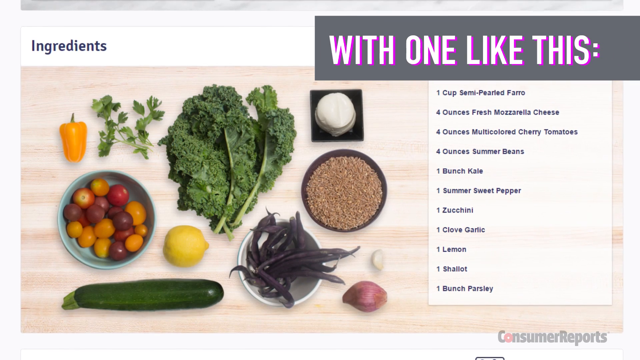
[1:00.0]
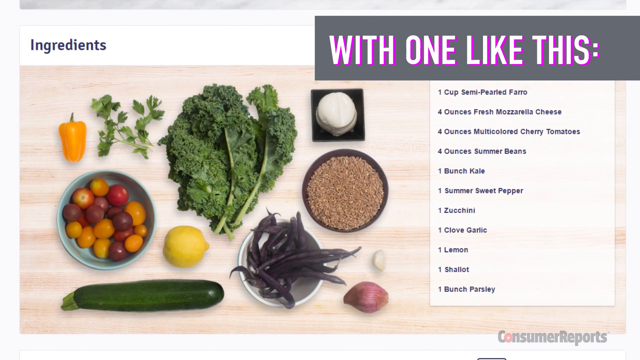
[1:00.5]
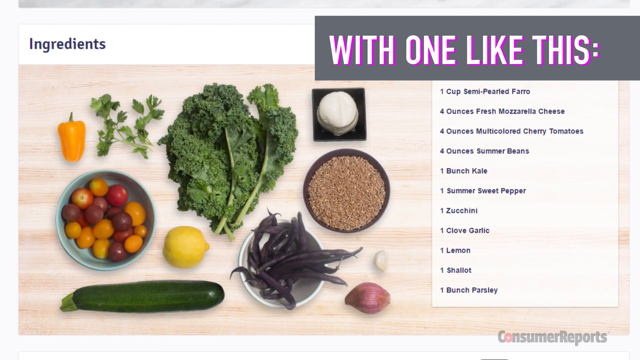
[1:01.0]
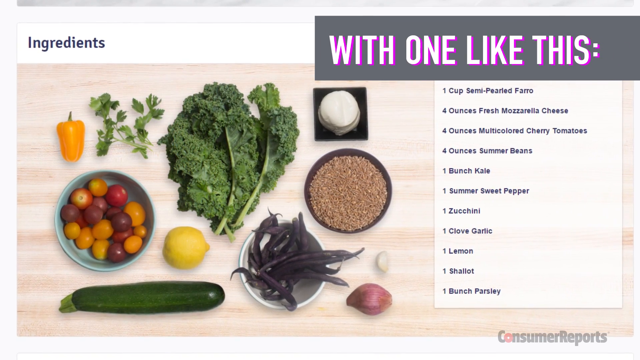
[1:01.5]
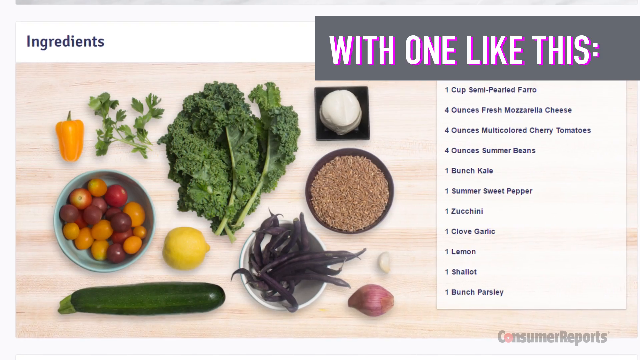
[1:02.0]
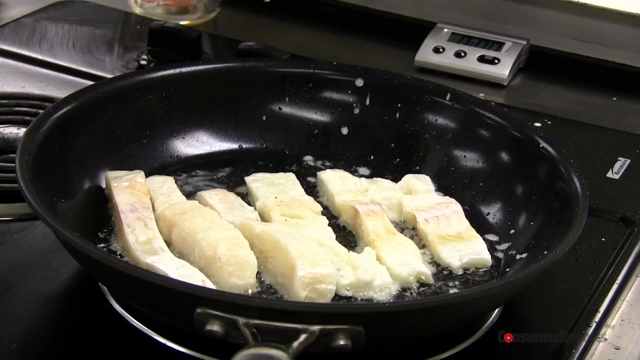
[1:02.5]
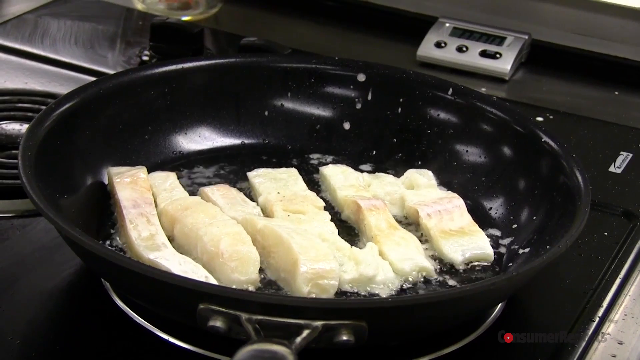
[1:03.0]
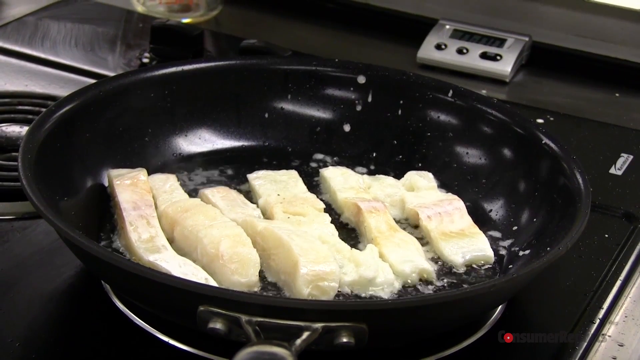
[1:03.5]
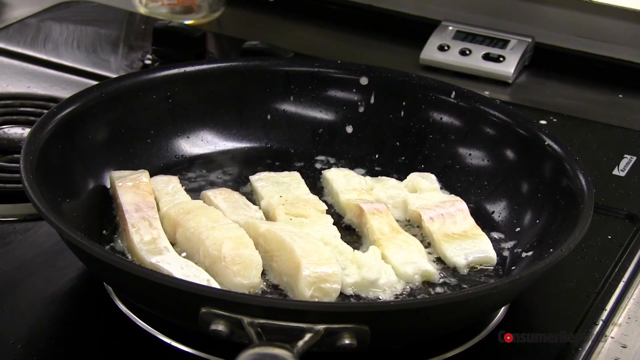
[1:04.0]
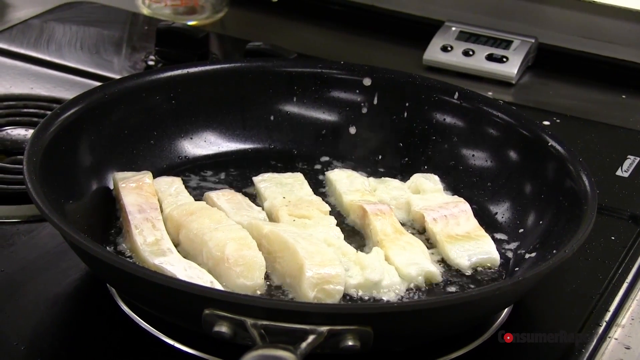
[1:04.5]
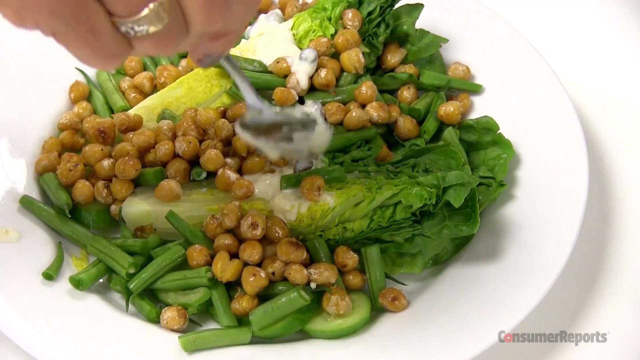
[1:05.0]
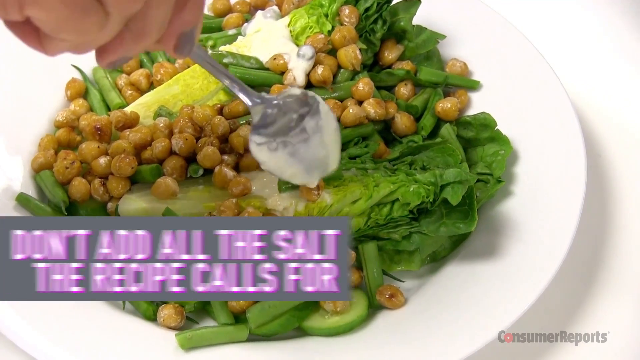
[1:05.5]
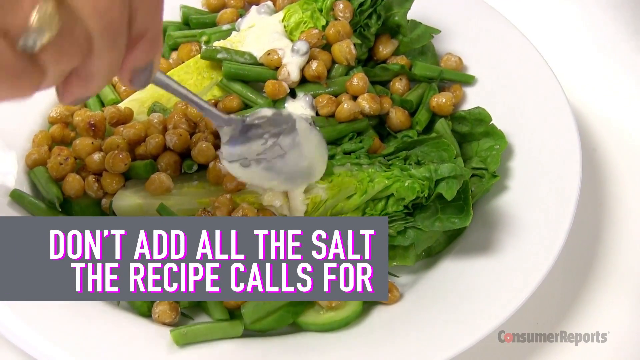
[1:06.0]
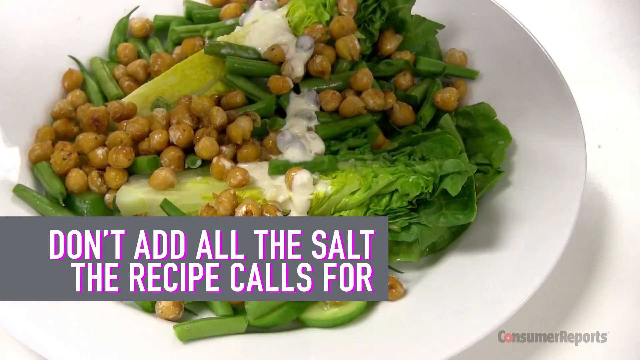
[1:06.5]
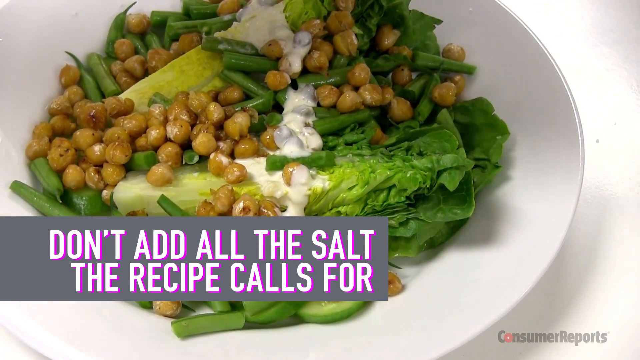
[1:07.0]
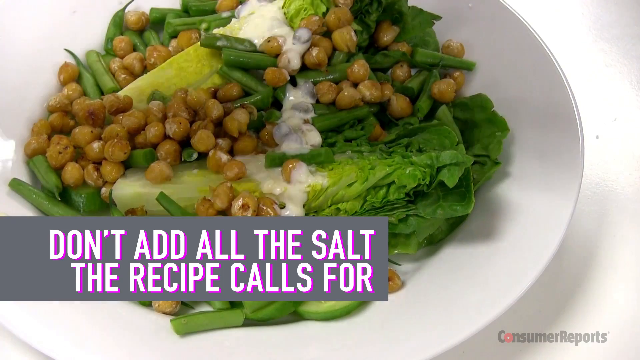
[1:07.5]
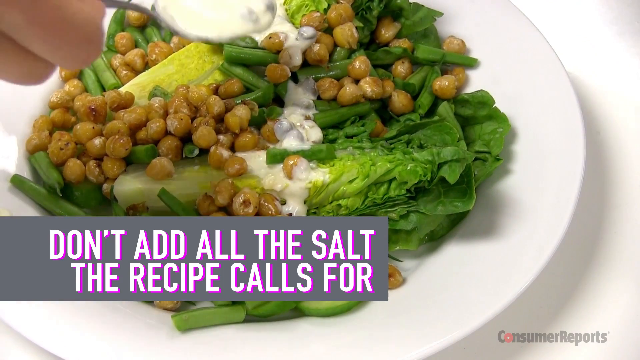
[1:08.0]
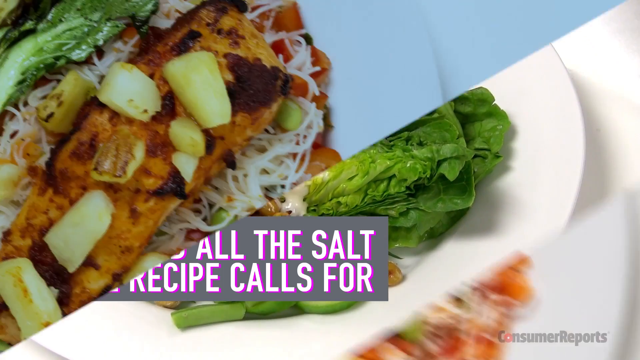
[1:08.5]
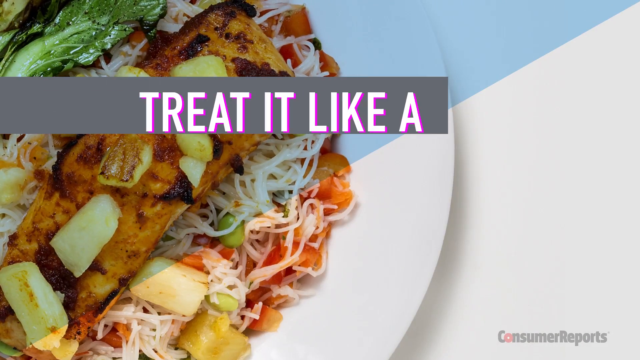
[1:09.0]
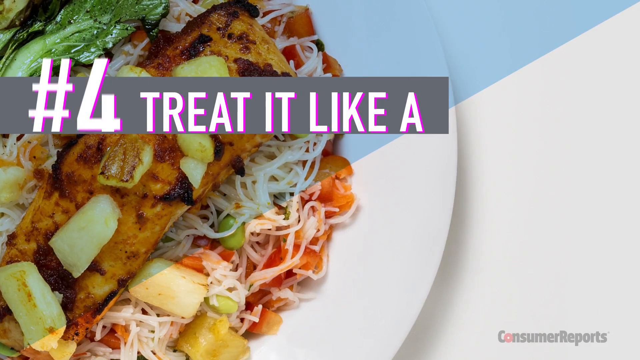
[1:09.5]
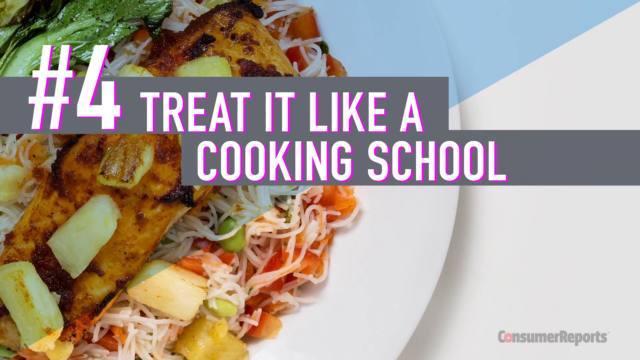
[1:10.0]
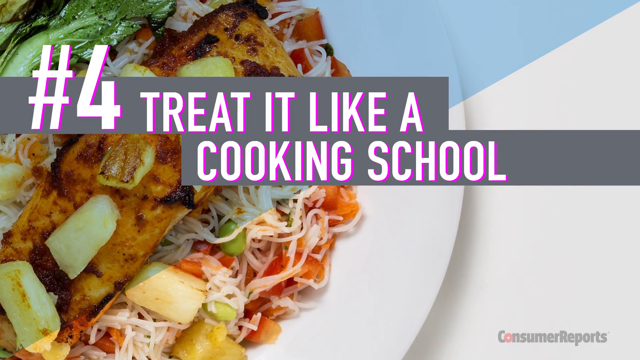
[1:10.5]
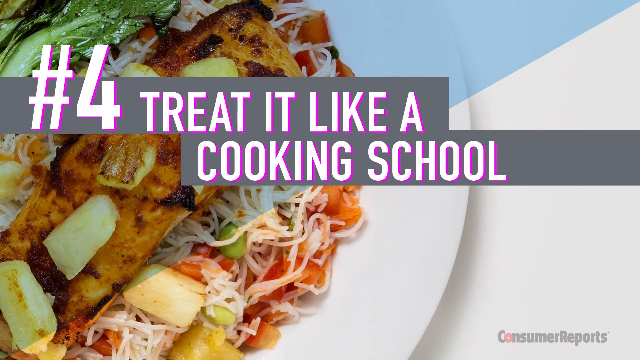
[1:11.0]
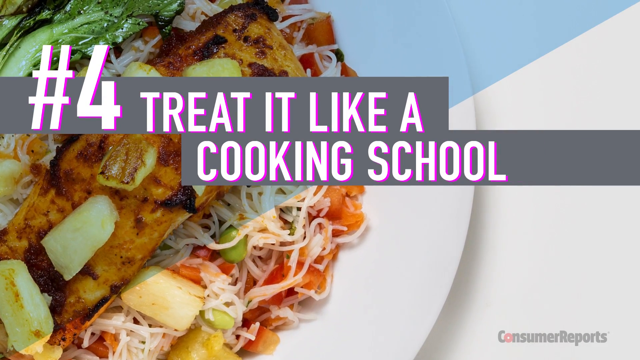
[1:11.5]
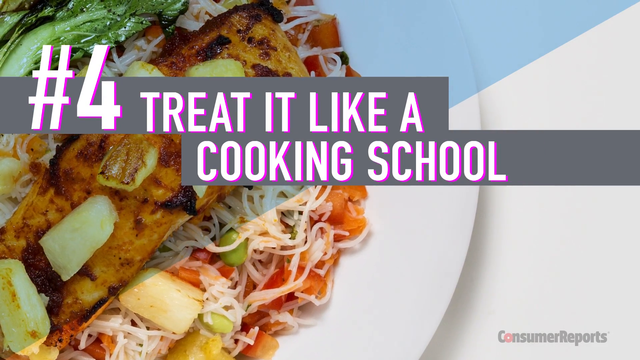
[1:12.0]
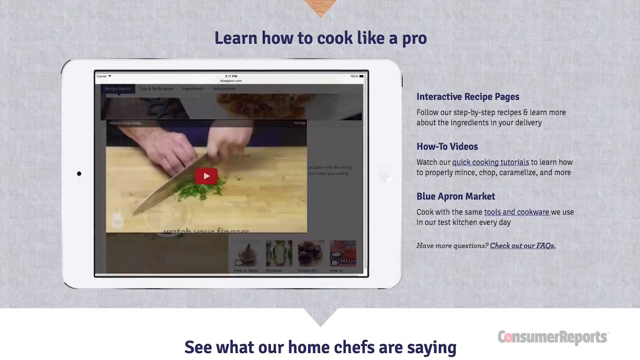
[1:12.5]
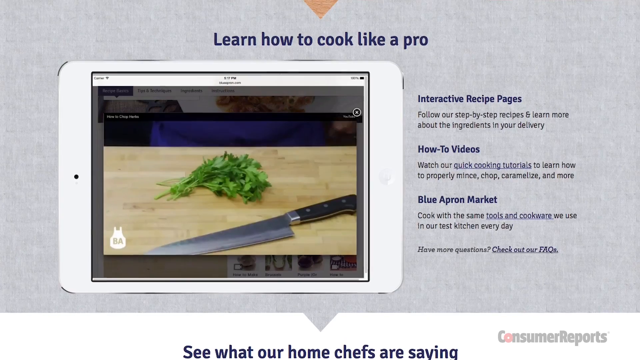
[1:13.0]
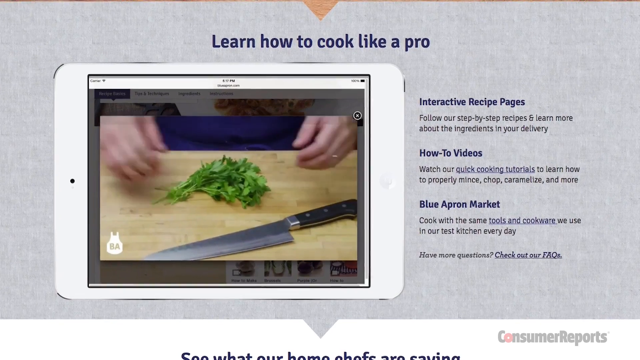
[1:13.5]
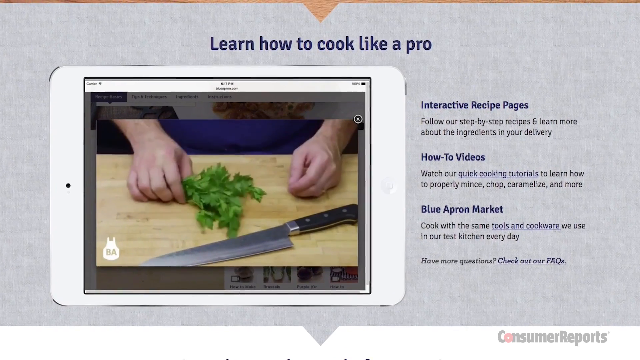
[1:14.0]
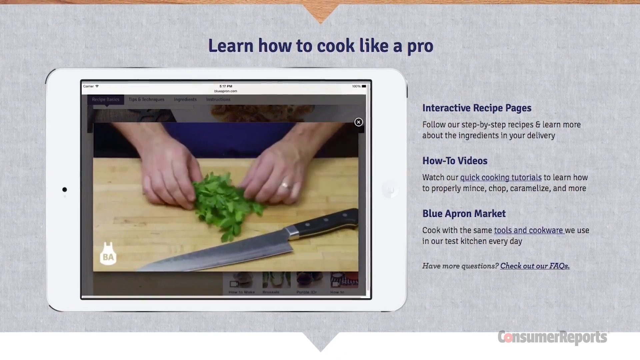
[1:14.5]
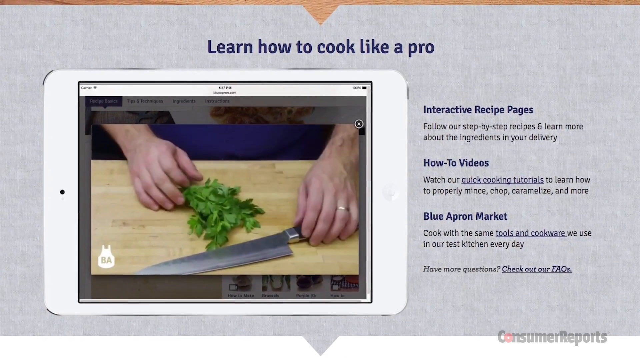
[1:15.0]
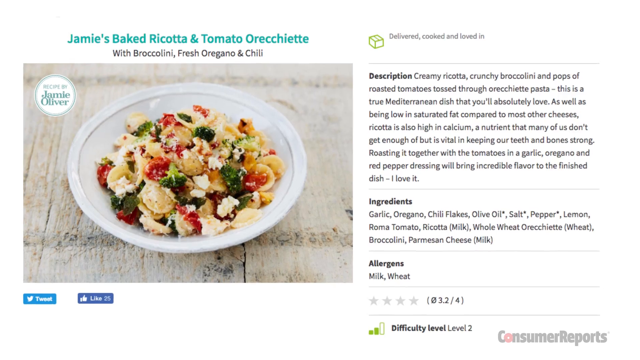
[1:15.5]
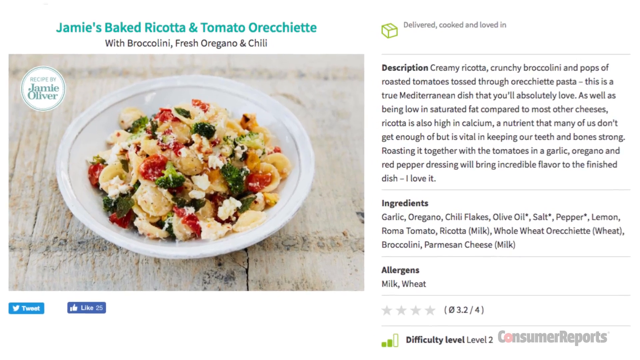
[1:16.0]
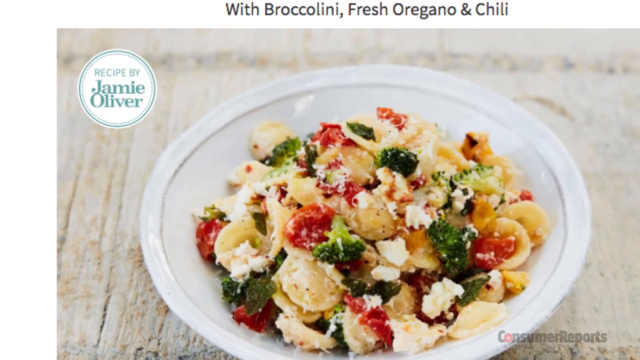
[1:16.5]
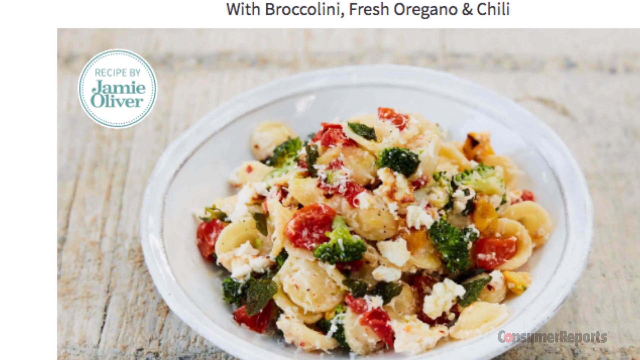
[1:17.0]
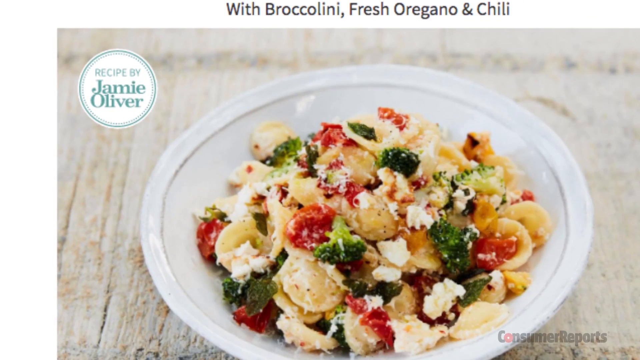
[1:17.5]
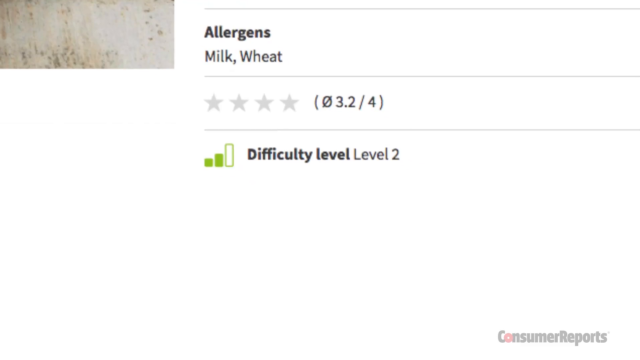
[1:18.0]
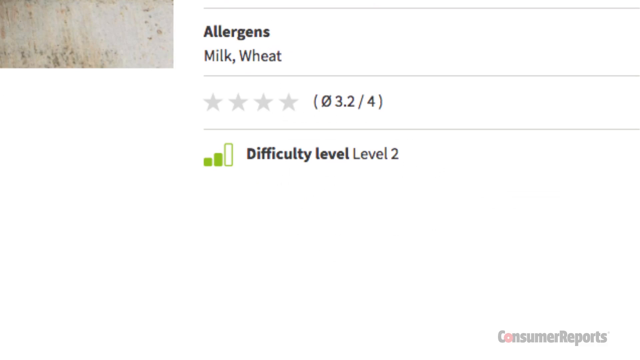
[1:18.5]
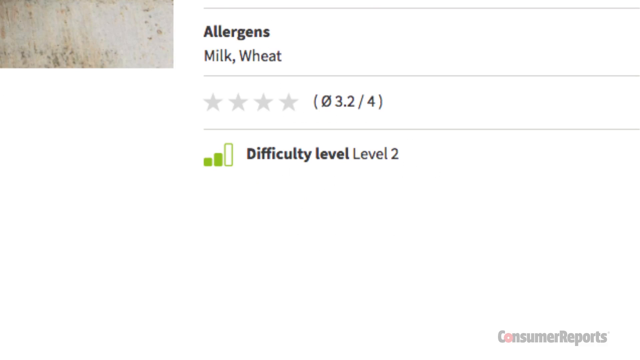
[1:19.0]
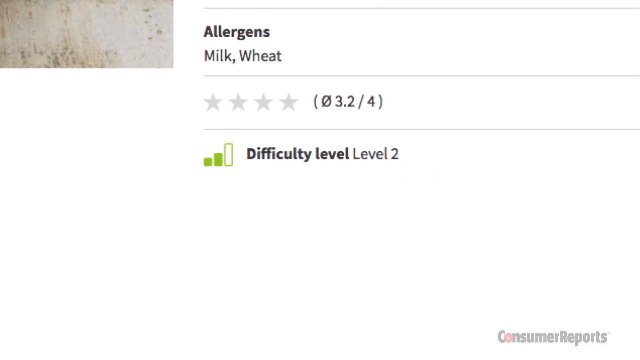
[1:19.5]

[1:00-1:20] At the top left of the screen is the word "Ingredients", and to the right, in big white letters with purple, is a list: semi-parled farro, four ounces of fresh mozzarella cheese, a bunch of kale, one zucchini, one summer sweet pepper, one clove of garlic, one lemon, one shallot and one bunch of parsley. To the left, the listed ingredients appear fresh, some in a bowl and some just laid out. Slabs of chicken are then shown on a frying pan, followed by the finished result on a plate, with text reading "don't add all the salt the recipe calls for".